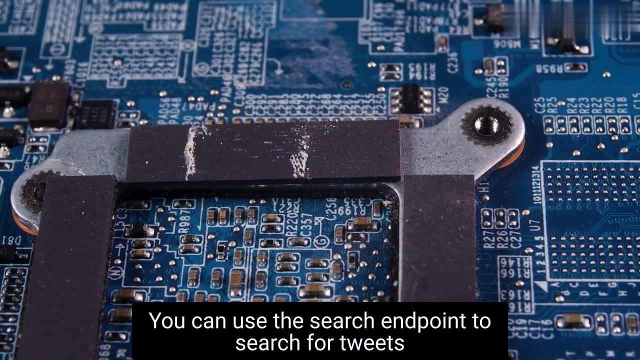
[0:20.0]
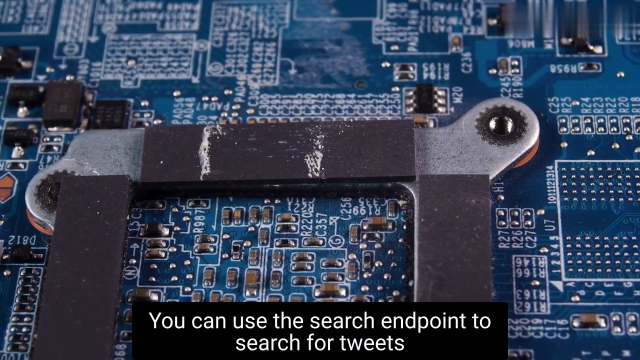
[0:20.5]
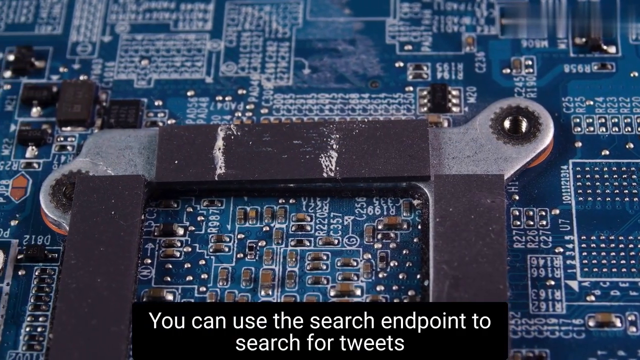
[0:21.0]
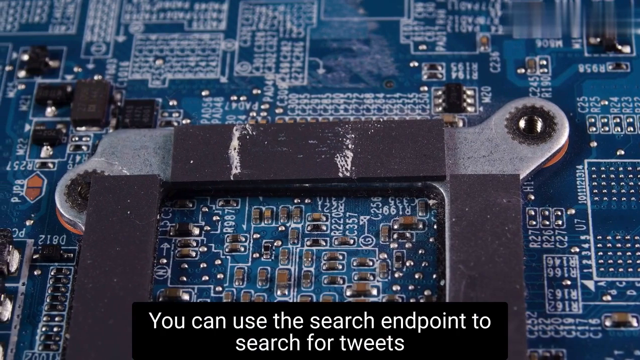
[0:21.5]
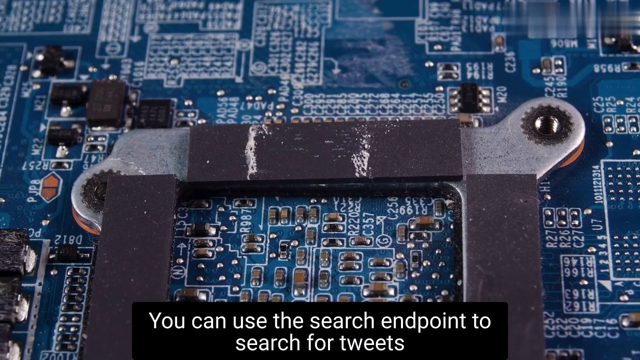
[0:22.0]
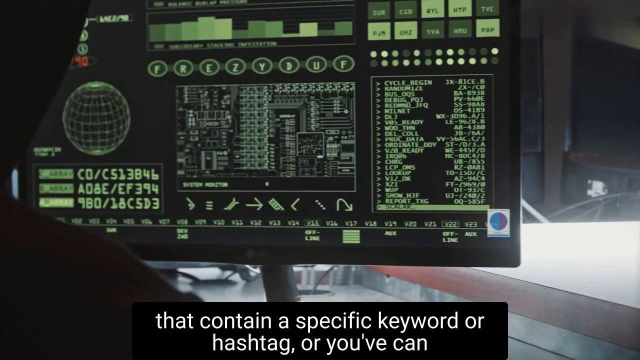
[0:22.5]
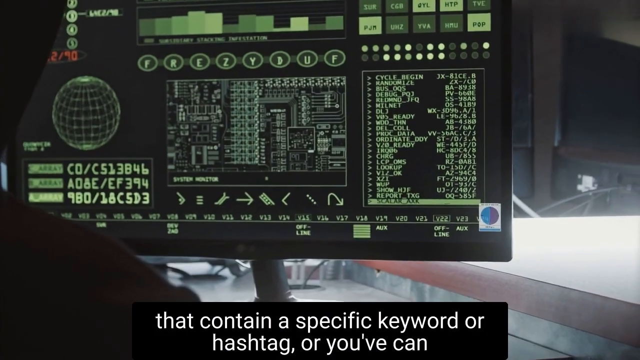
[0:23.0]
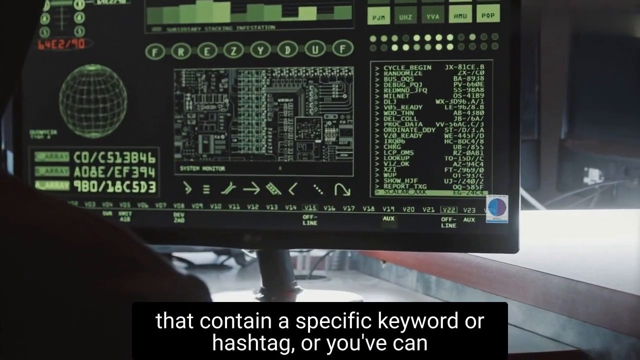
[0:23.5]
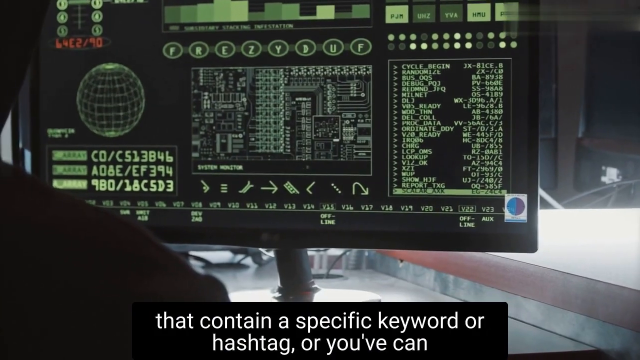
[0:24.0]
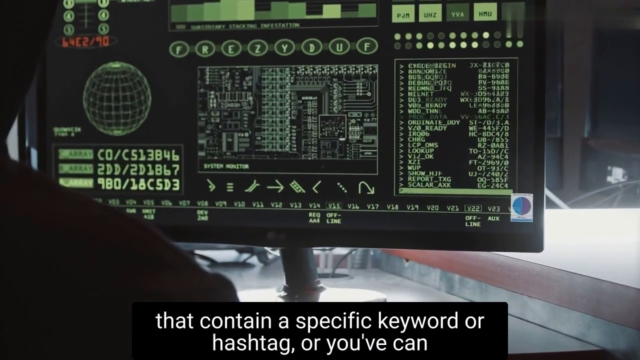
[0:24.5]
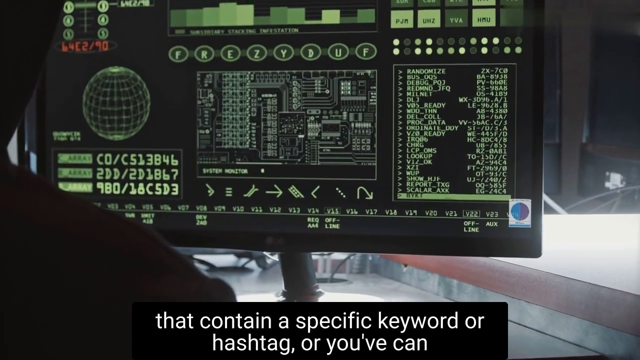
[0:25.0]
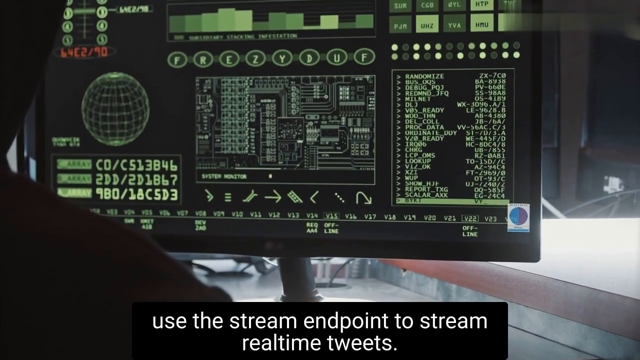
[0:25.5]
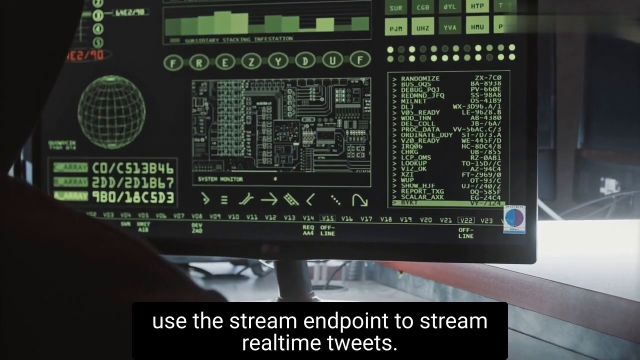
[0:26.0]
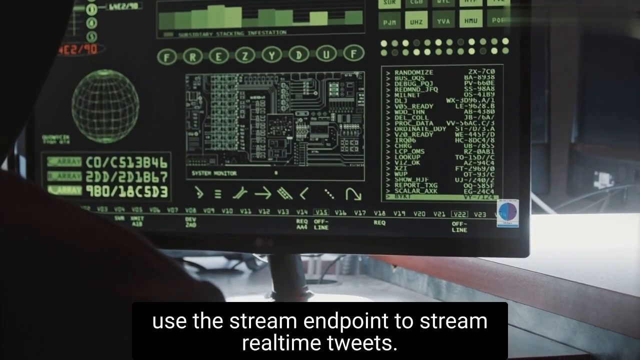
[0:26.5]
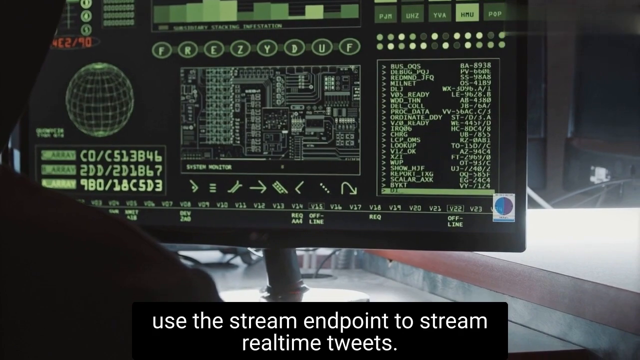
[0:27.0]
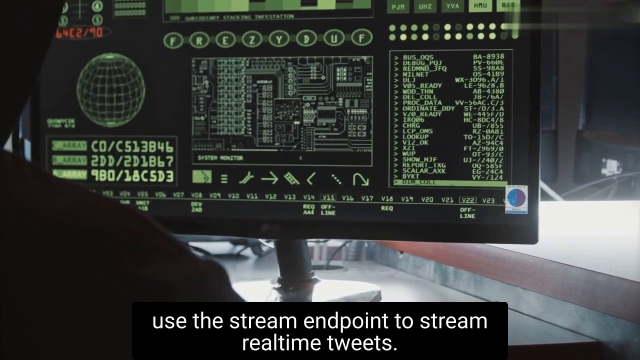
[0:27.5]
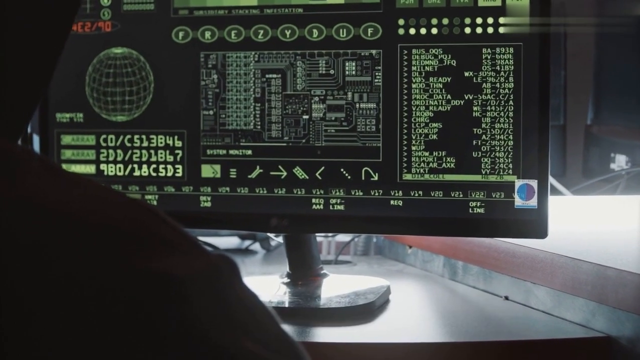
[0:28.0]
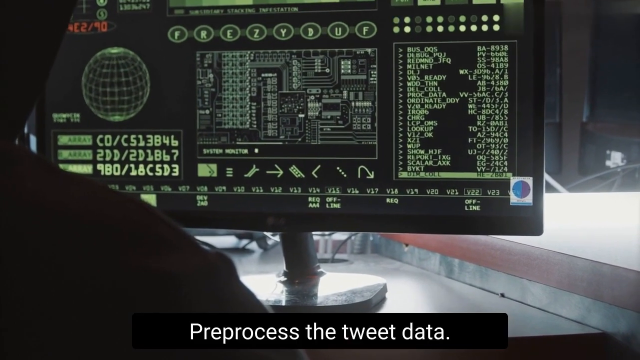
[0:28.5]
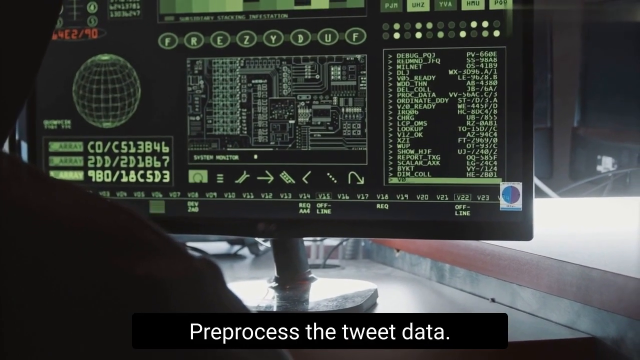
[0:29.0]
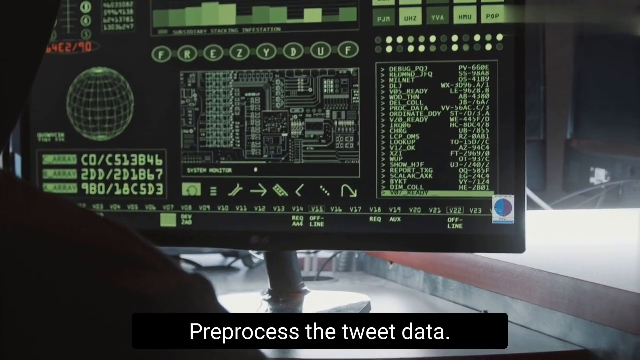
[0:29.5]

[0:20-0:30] The scene starts on the computer chip background and then shifts to a view of a computer screen, with the back of the head of what appears to be a man looking at it. Text in black boxes at the bottom moves very quickly and reads "you can use the search endpoint to search for tweets that contain a specific keyword or hashtag, or you can use the stream endpoint to stream real-time tweets, preprocess the tweet data." The computer screen is filled with green graphics, so little of what the man is looking at can be made out, but the real-time graphics move quickly and the numbers change very fast.